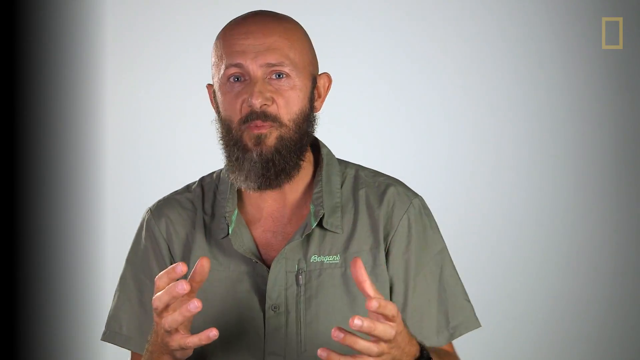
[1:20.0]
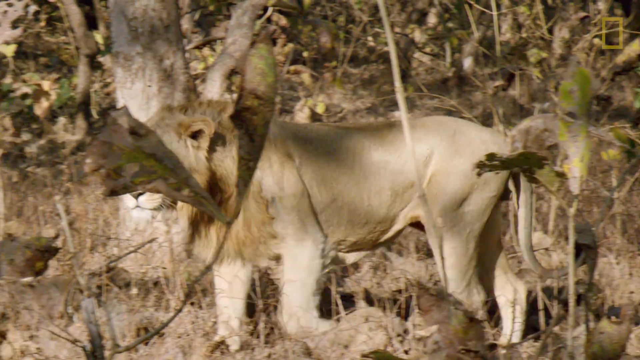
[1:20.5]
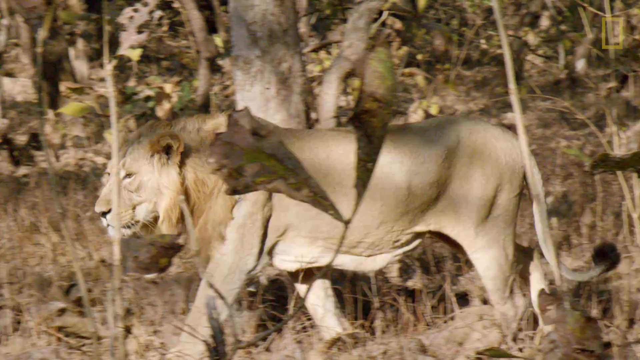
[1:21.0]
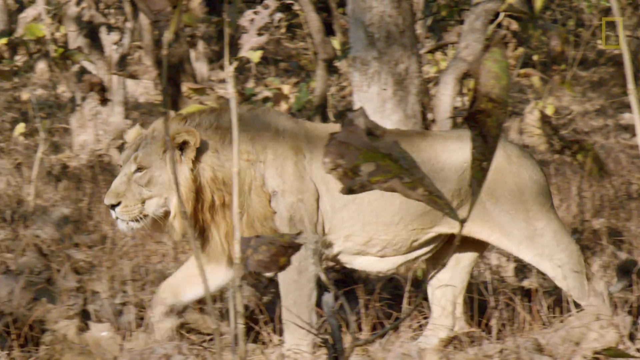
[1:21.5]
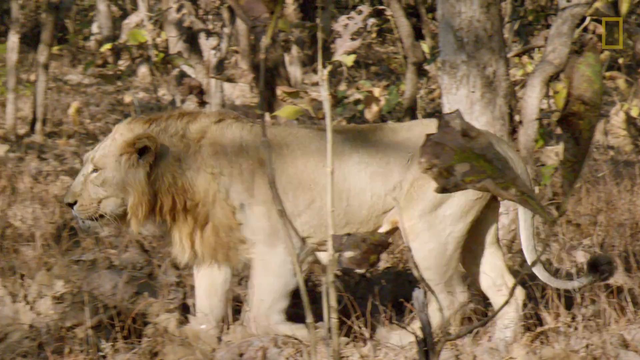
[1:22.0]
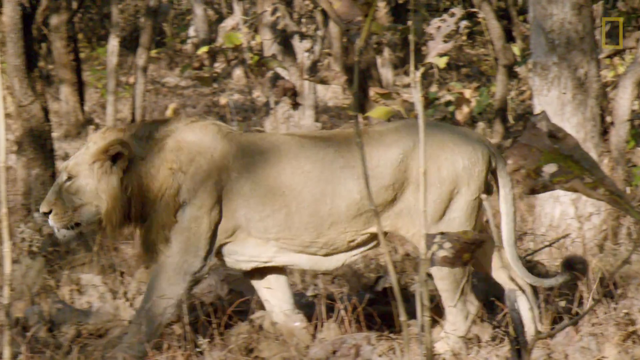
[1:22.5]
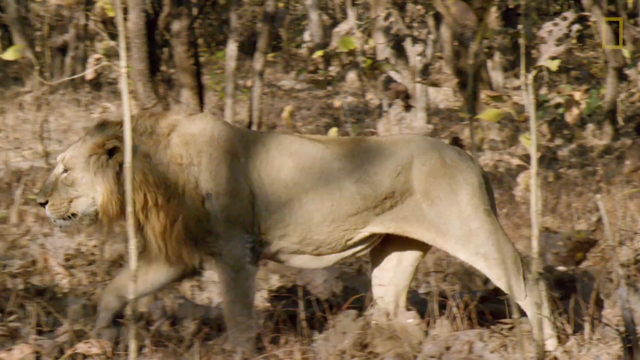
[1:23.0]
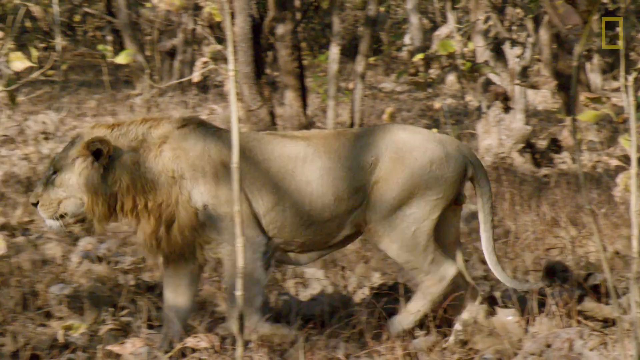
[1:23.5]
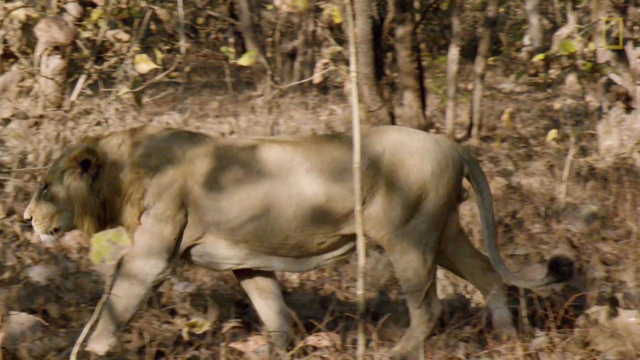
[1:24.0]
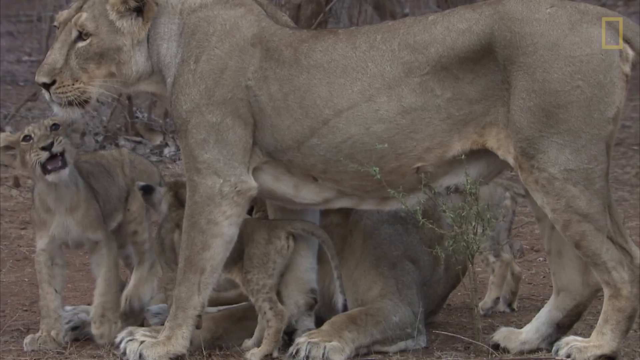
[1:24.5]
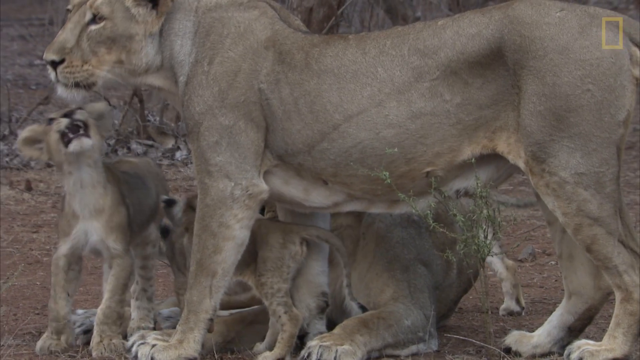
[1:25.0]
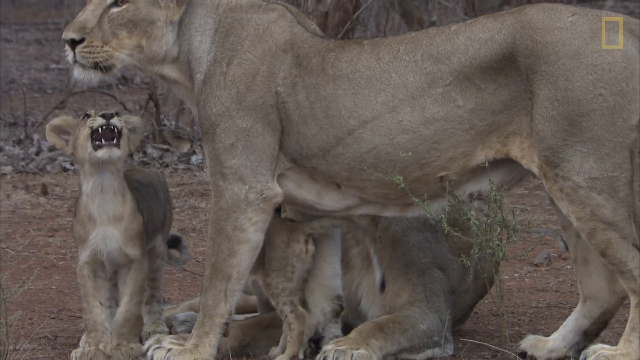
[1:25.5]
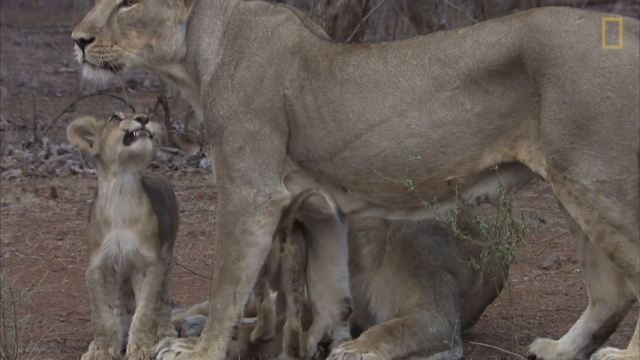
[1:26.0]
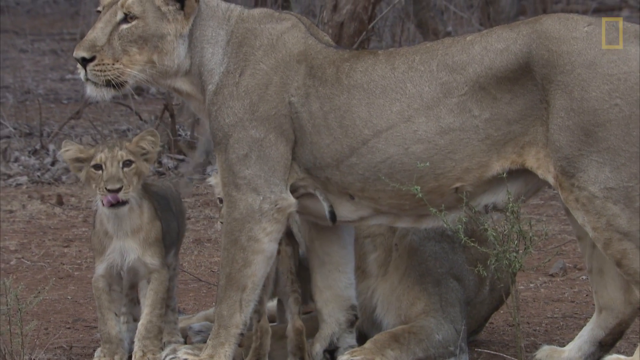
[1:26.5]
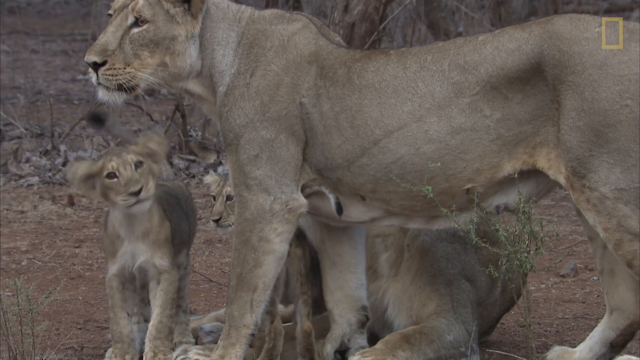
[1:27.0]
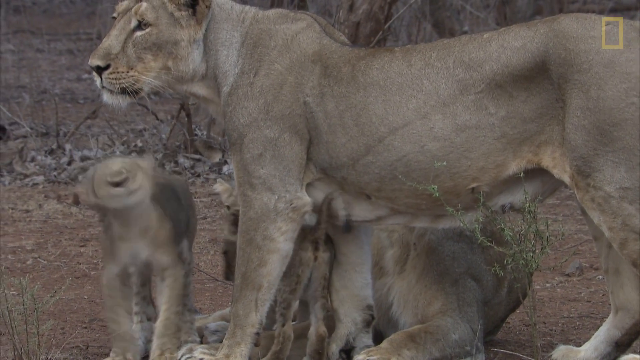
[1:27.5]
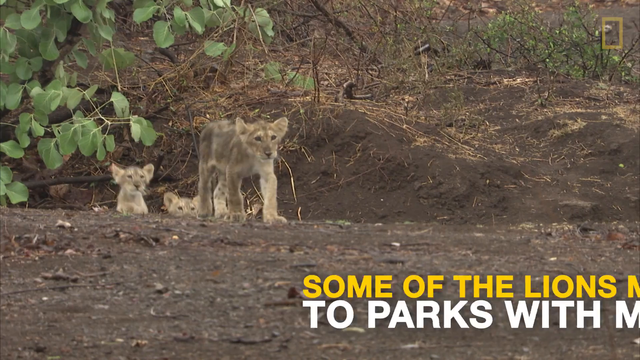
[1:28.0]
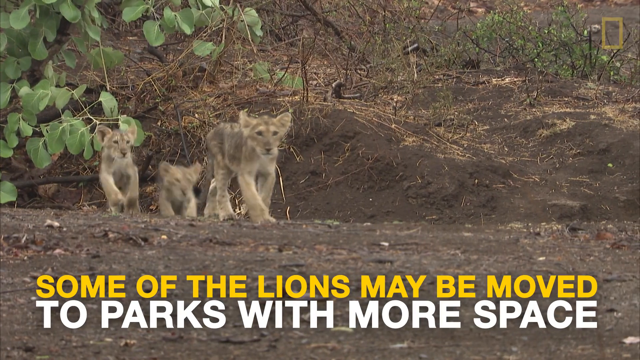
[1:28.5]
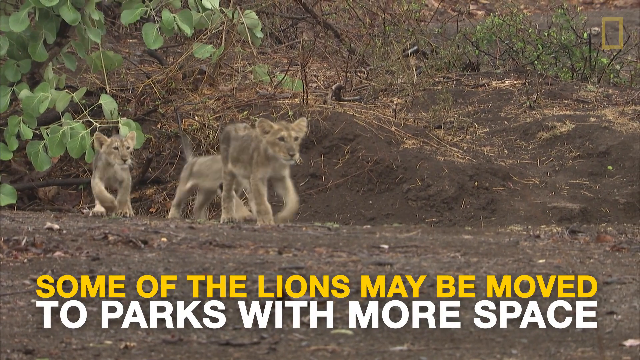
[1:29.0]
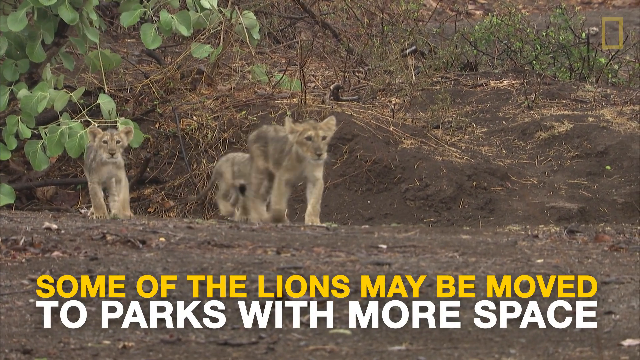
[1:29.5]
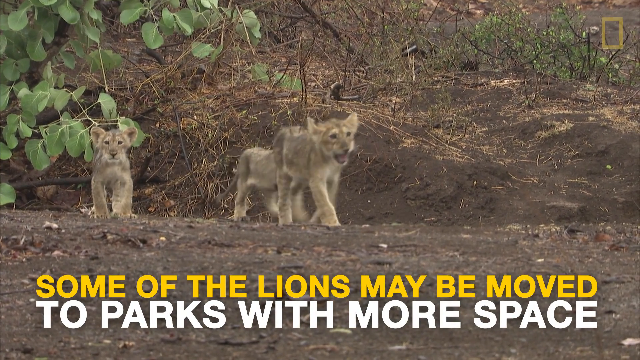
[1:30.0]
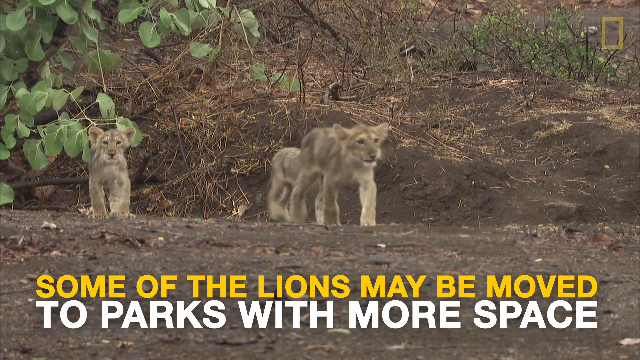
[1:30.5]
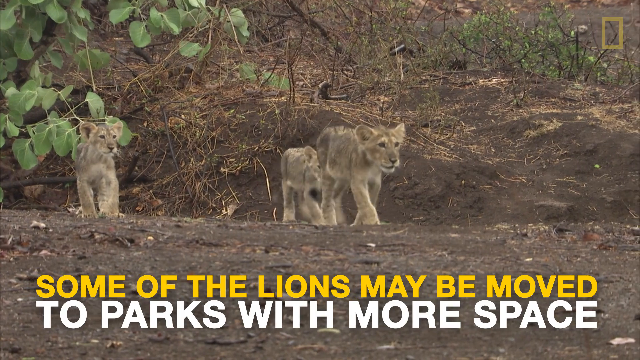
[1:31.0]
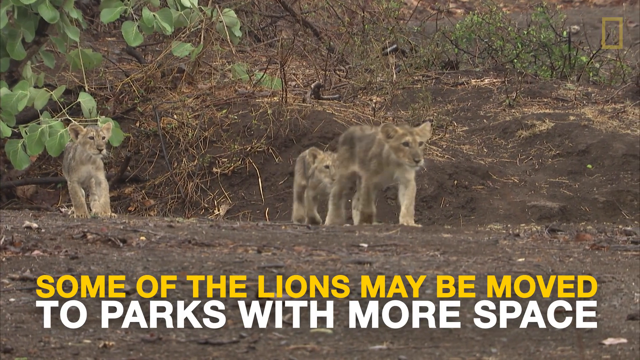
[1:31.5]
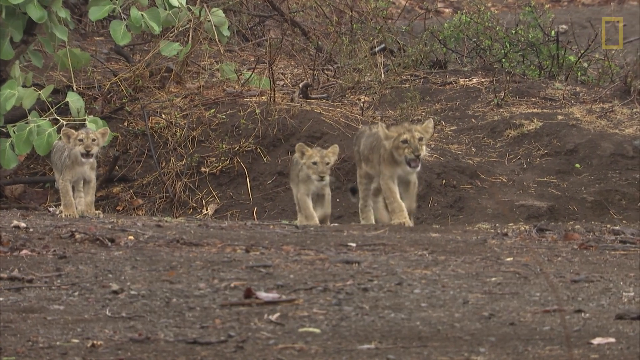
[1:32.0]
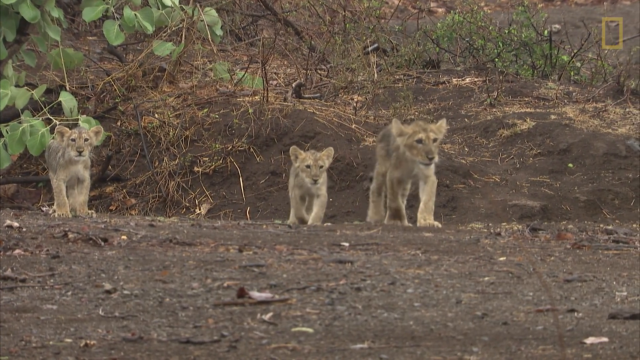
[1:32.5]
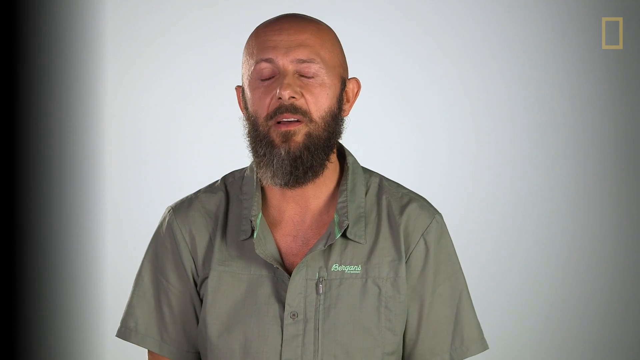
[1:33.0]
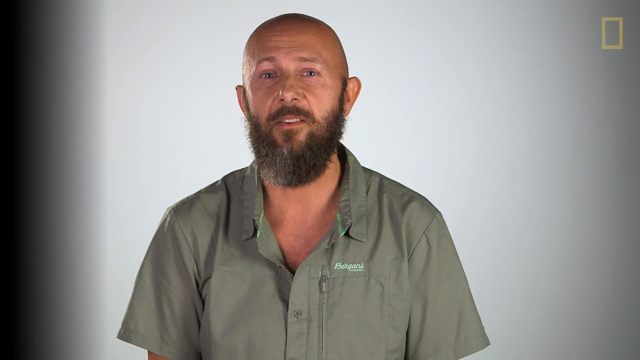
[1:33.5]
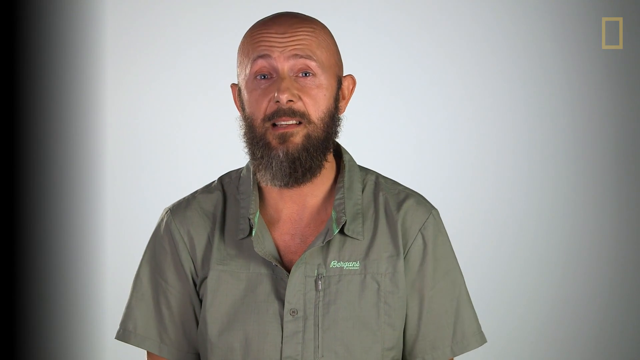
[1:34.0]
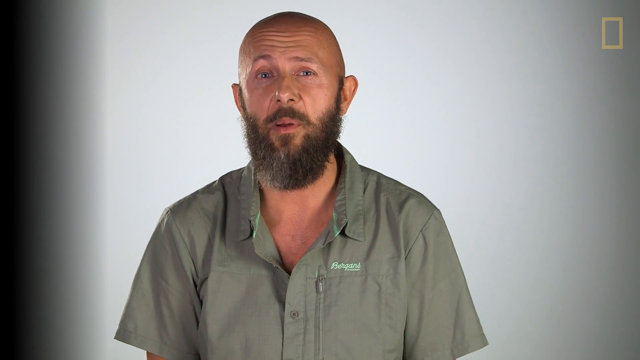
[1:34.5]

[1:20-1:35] A lion roams around, along with small baby lions. The scene apparently concerns some of the lions maybe being moved to parks with more space. The slow-paced footage cuts from a big lion to a small lion, with the lions playing and walking around leisurely. At the end, the video goes back to the conservation photographer.